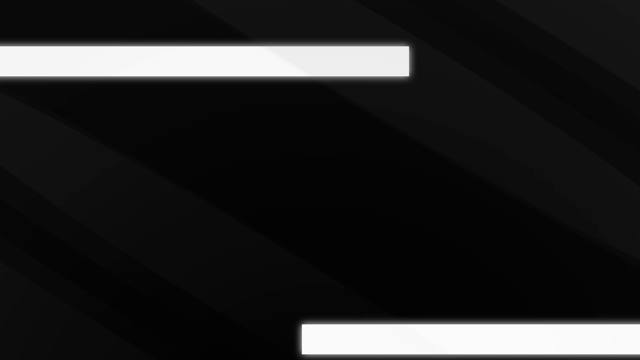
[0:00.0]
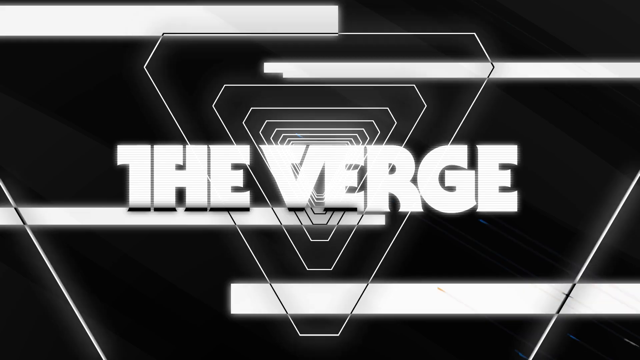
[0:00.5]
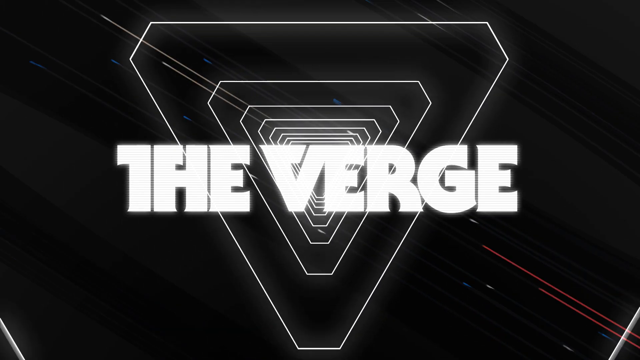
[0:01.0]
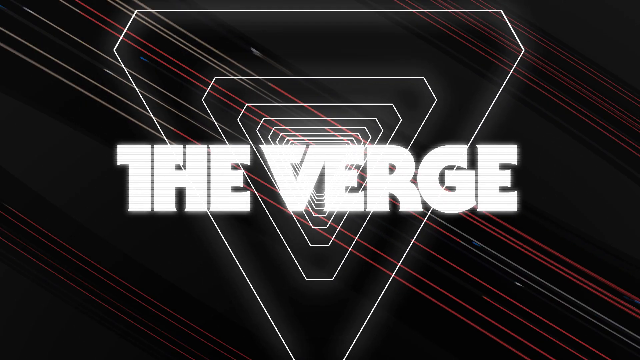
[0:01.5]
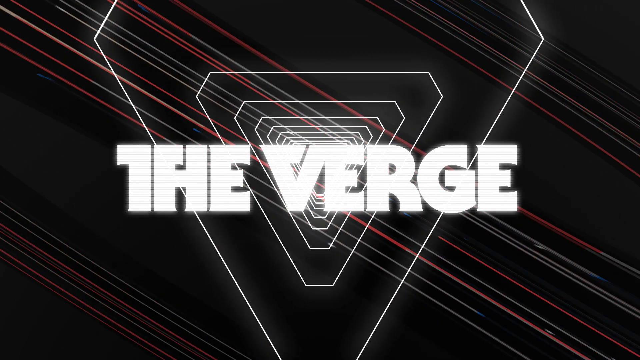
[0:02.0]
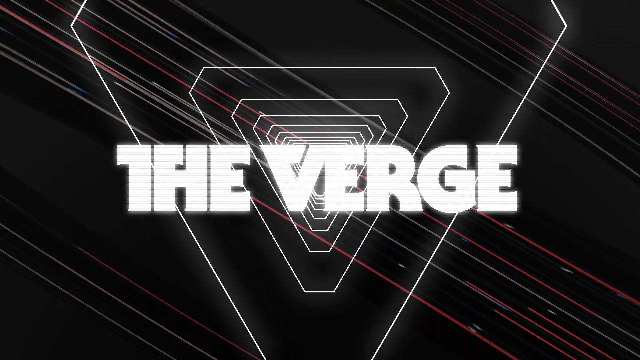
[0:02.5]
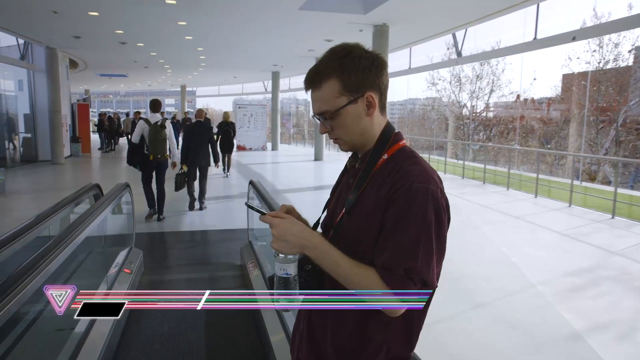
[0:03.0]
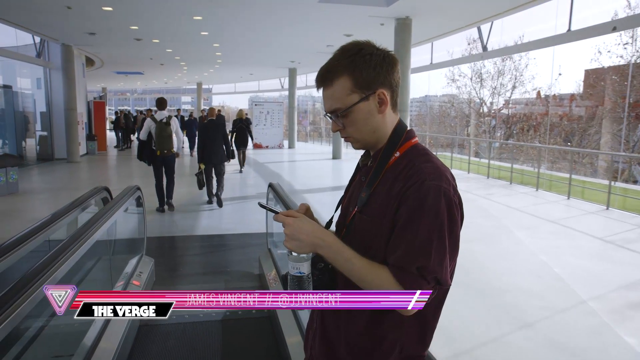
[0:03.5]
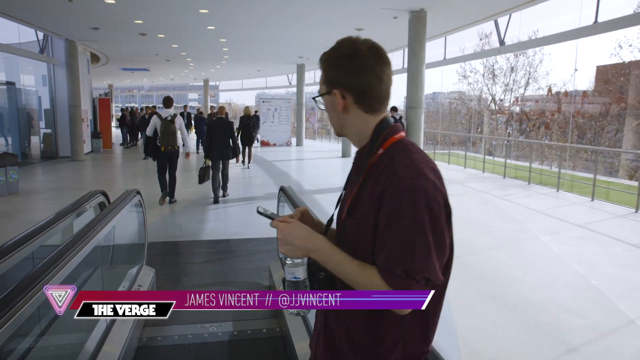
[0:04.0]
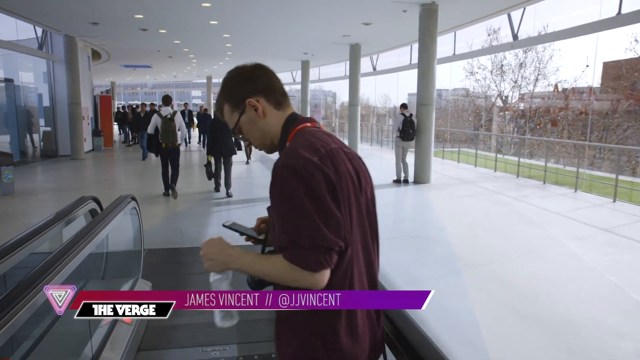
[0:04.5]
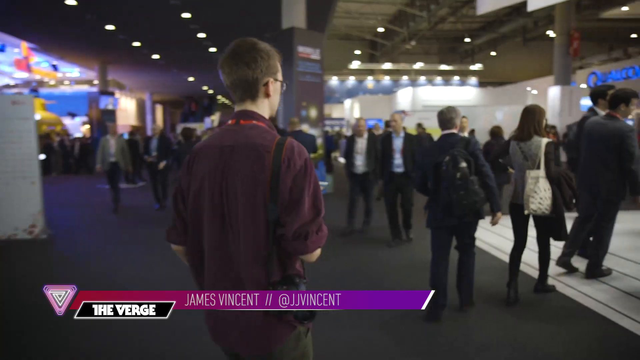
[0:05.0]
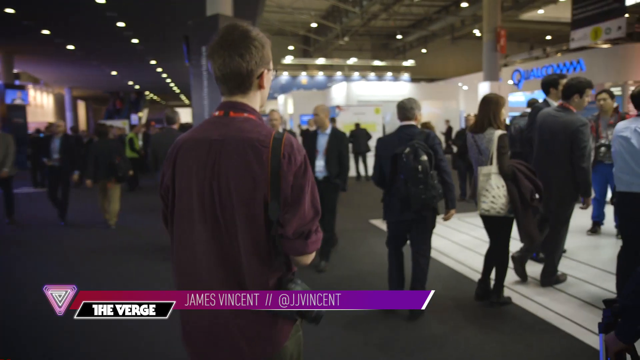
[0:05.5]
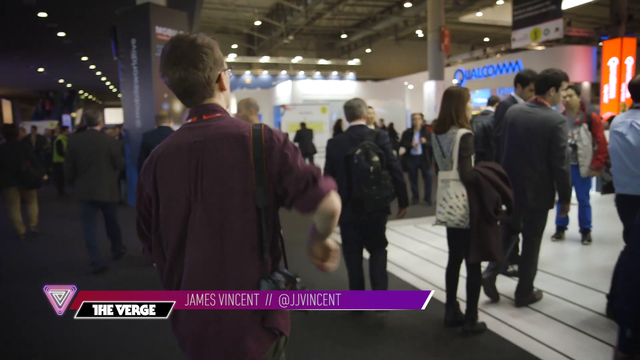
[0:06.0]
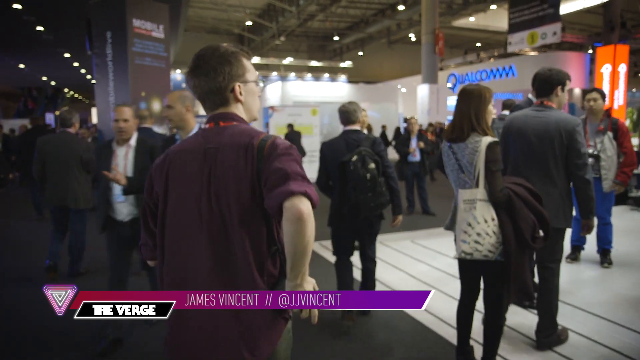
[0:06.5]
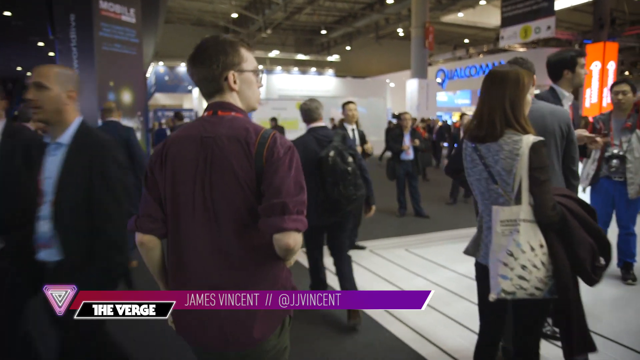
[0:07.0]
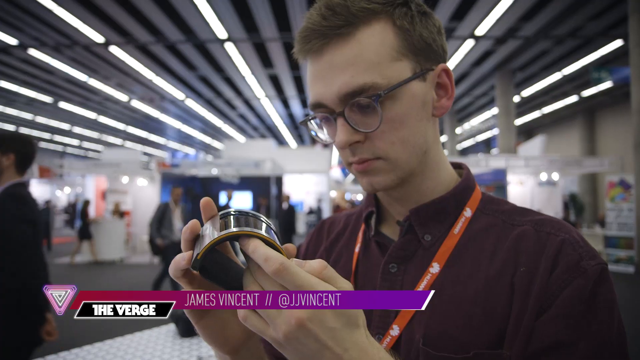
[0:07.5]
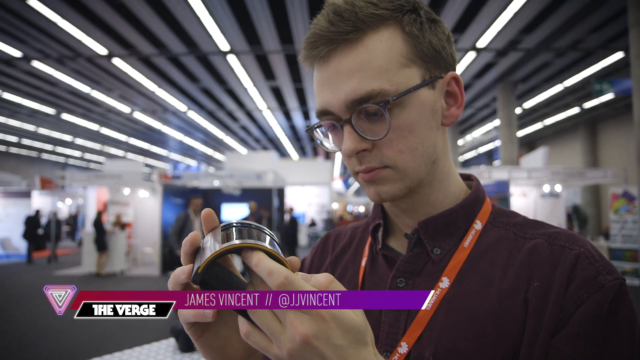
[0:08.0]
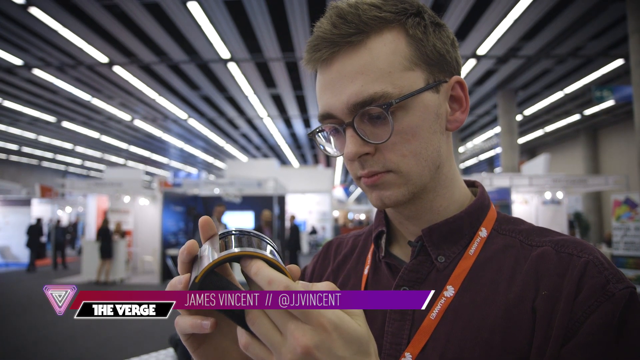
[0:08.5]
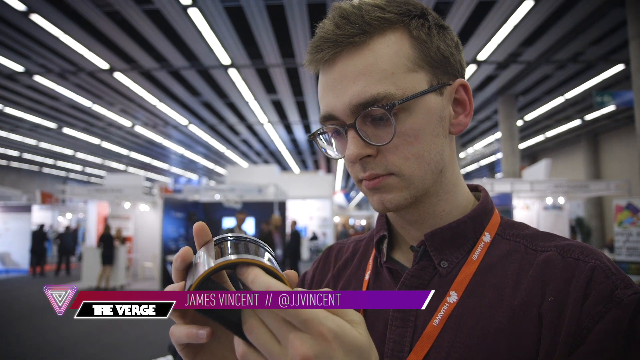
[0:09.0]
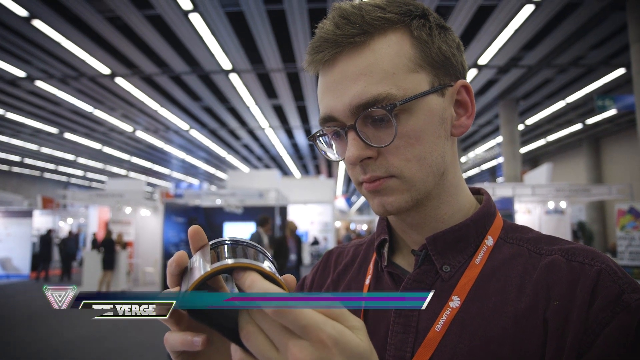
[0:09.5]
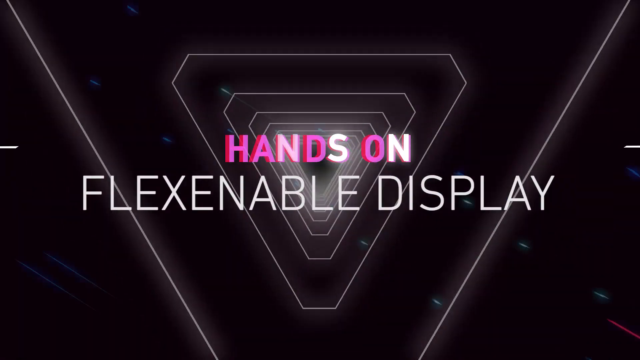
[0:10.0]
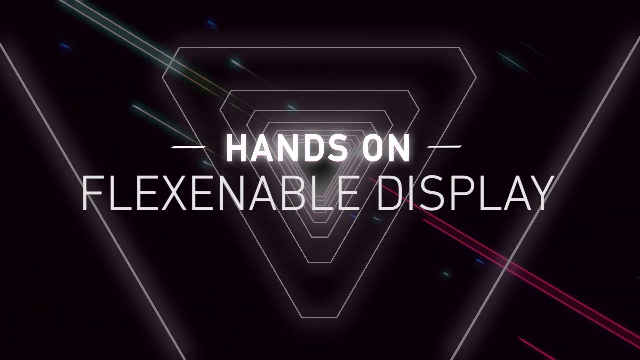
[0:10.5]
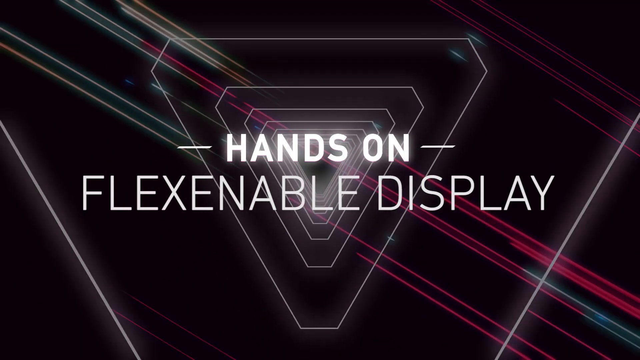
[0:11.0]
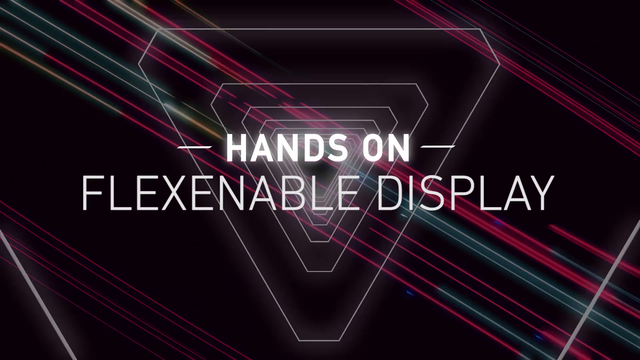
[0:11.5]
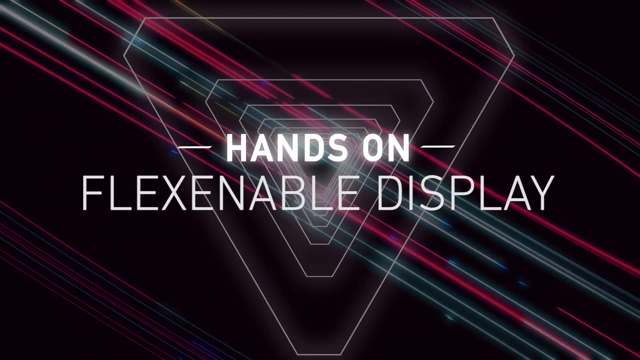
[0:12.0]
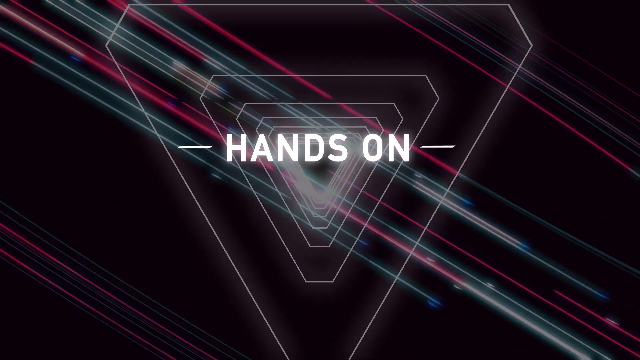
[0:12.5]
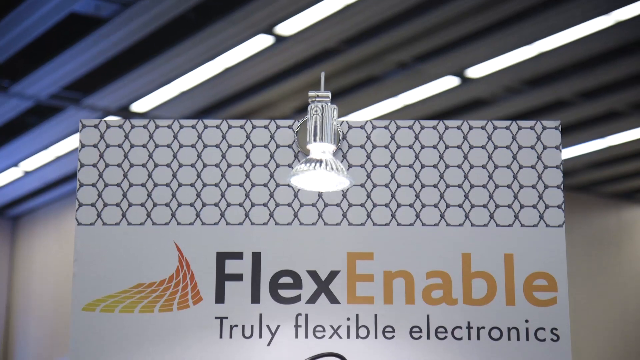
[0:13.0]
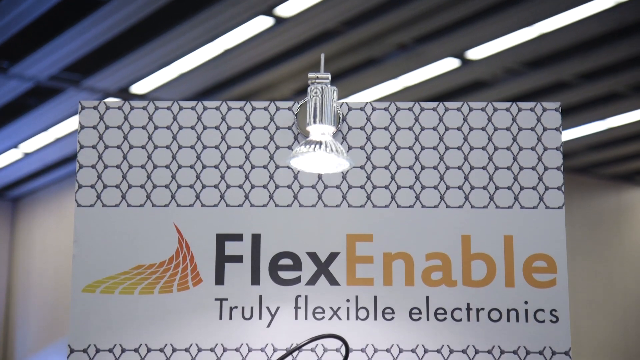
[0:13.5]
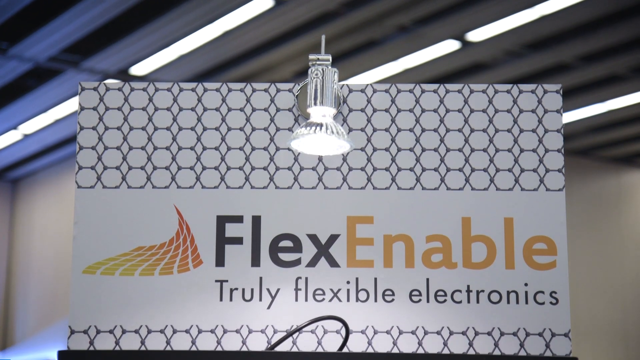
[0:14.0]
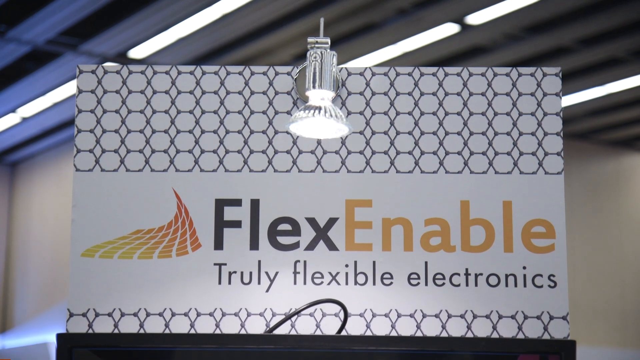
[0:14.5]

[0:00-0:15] The video opens on a black screen that says "the verge." A man then walks through a crowd and grabs a FlexEnable wristband that has a digital display on it. He is at a convention, and the product he is looking at is called FlexEnable truly flexible solutions. The convention building is filled with other tech companies, and many different people walk around. In the background, one of the shops is Qualcomm. The man's name is James Vincent.